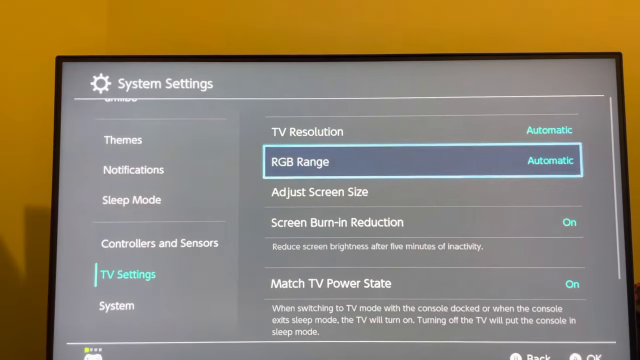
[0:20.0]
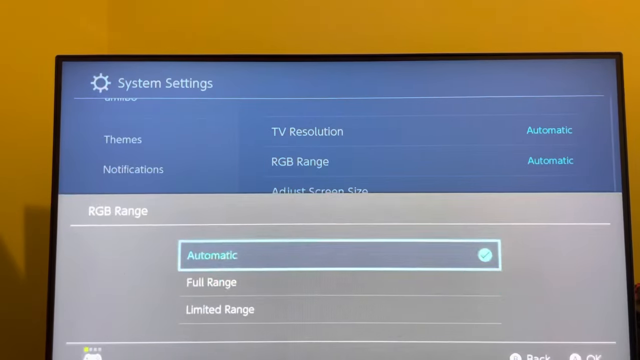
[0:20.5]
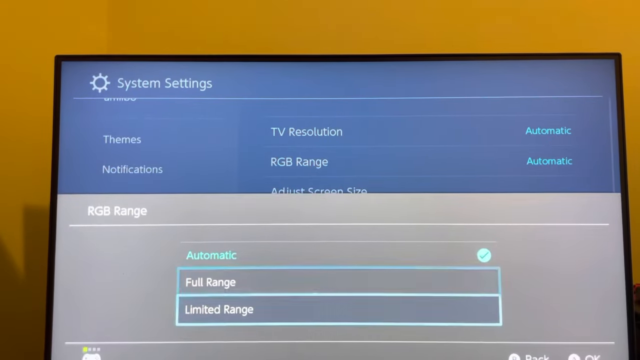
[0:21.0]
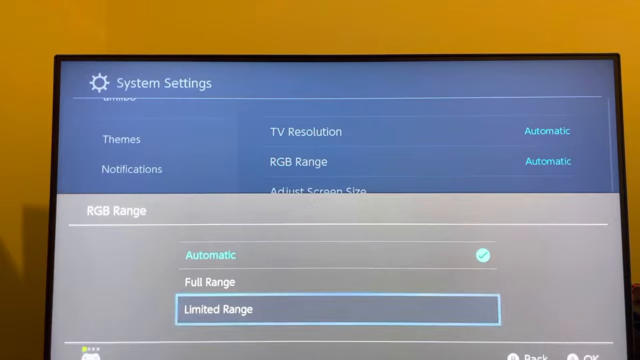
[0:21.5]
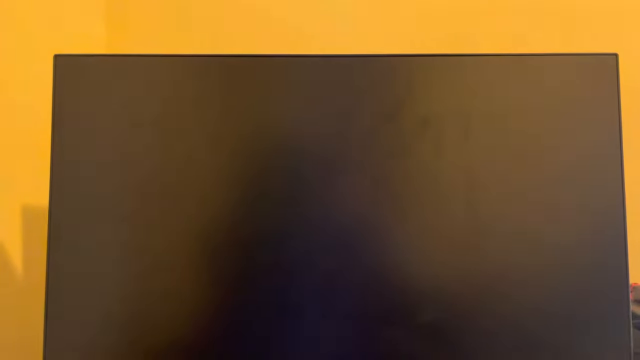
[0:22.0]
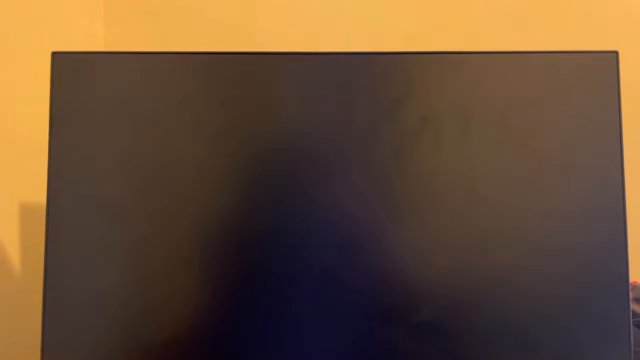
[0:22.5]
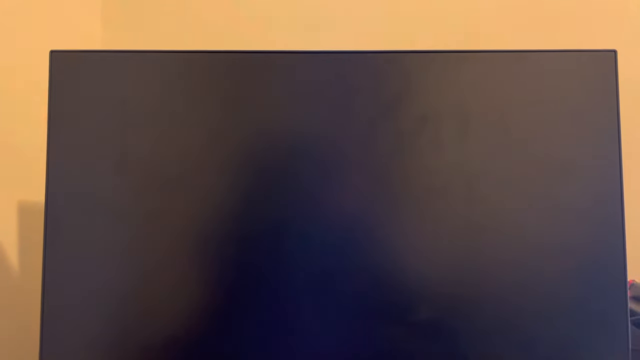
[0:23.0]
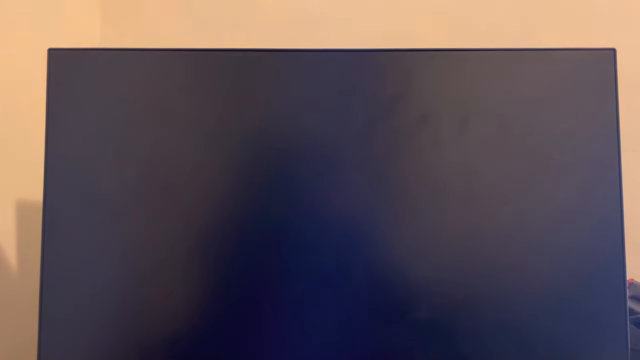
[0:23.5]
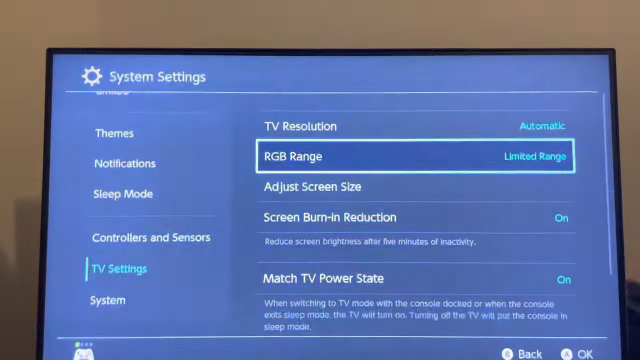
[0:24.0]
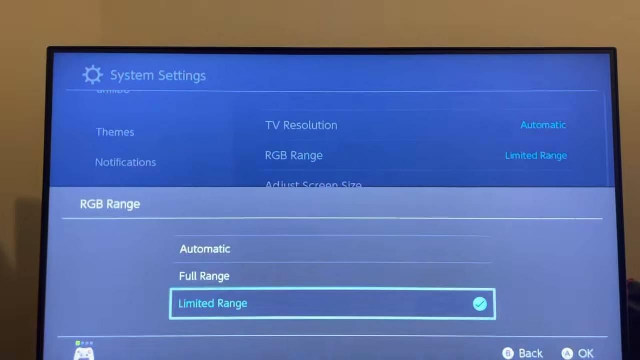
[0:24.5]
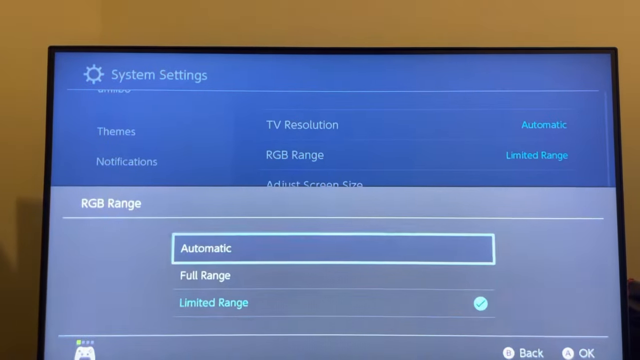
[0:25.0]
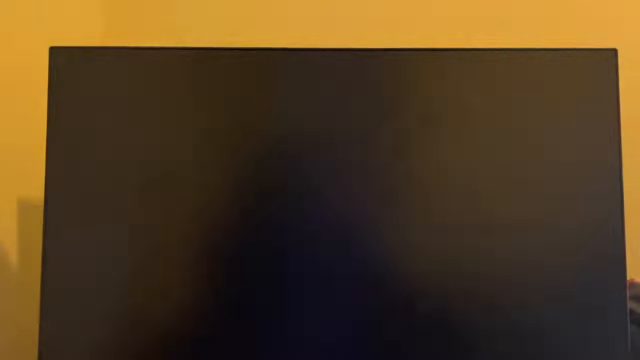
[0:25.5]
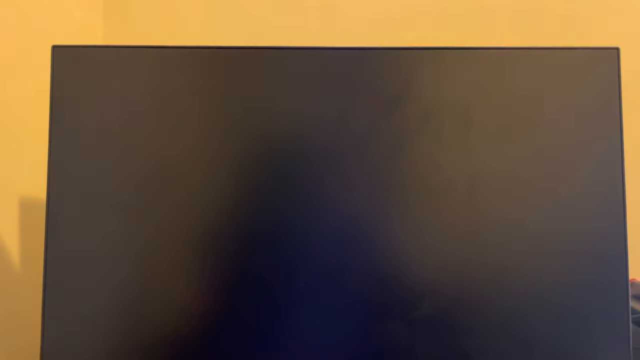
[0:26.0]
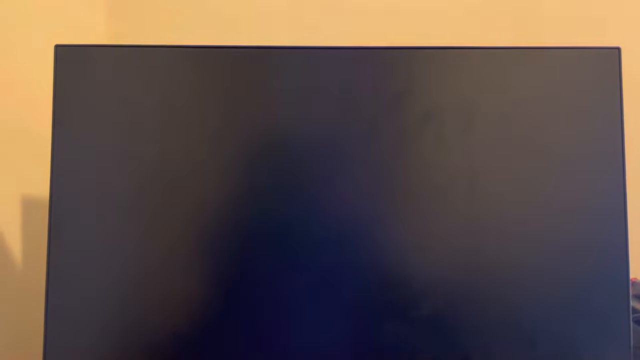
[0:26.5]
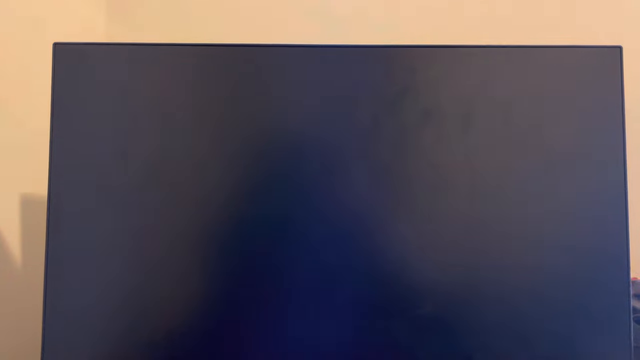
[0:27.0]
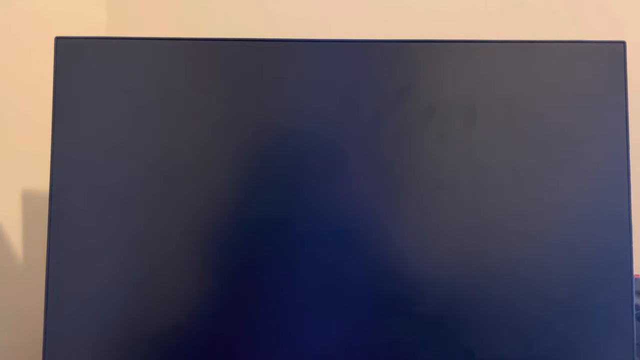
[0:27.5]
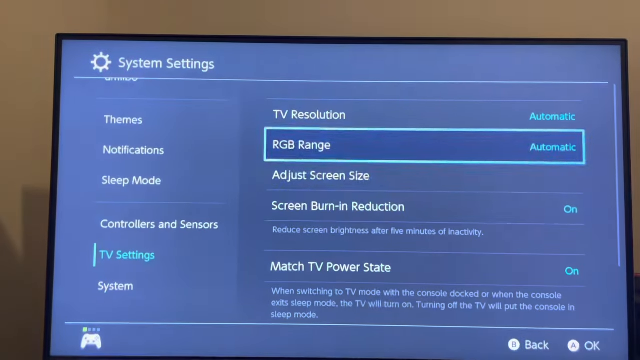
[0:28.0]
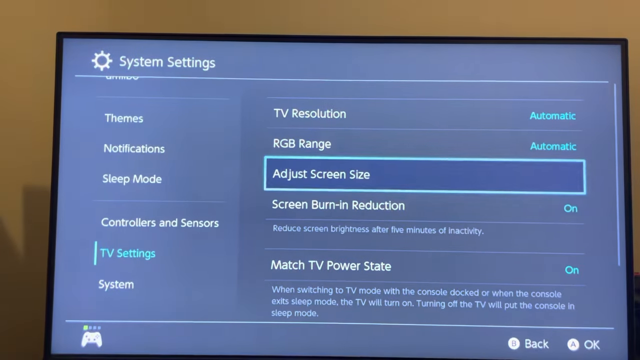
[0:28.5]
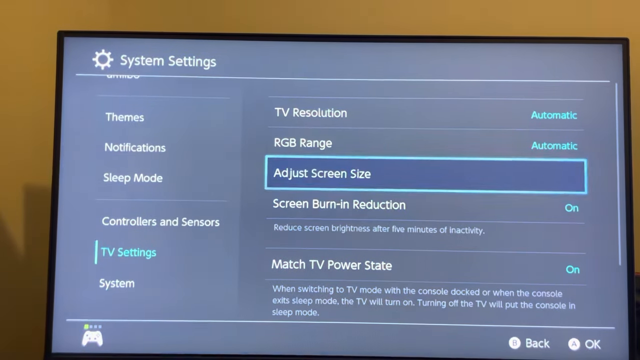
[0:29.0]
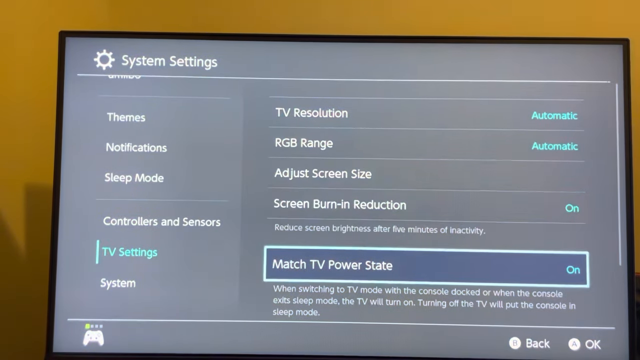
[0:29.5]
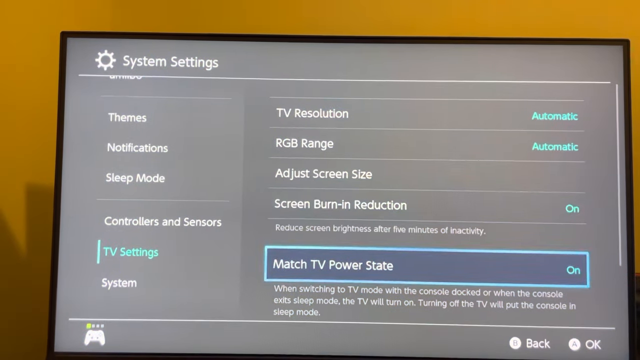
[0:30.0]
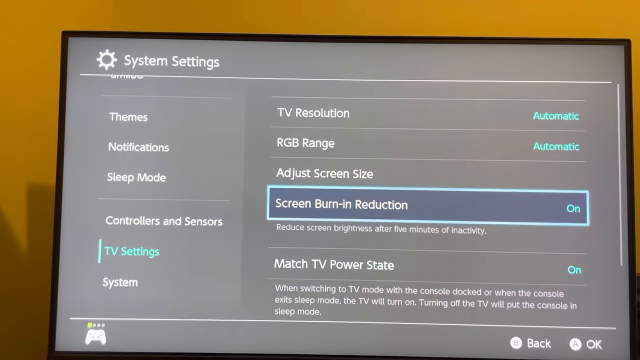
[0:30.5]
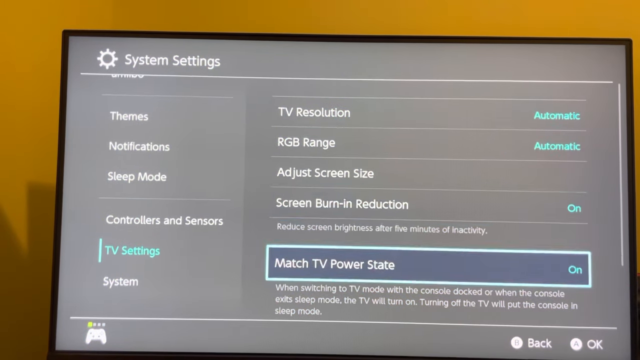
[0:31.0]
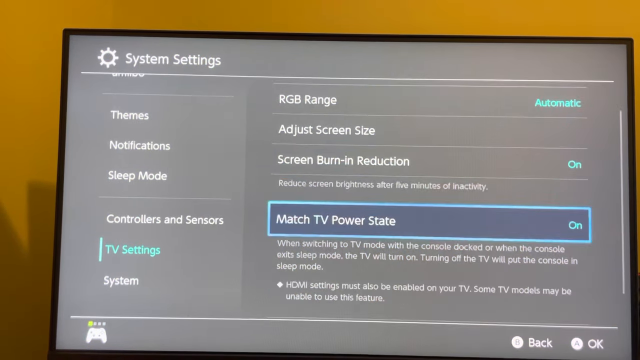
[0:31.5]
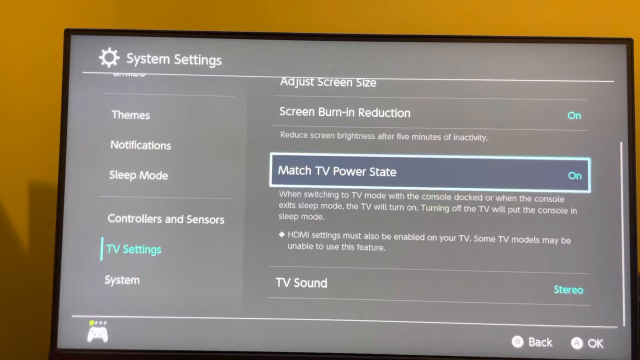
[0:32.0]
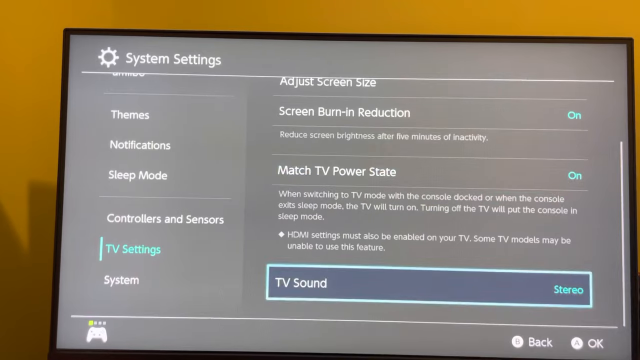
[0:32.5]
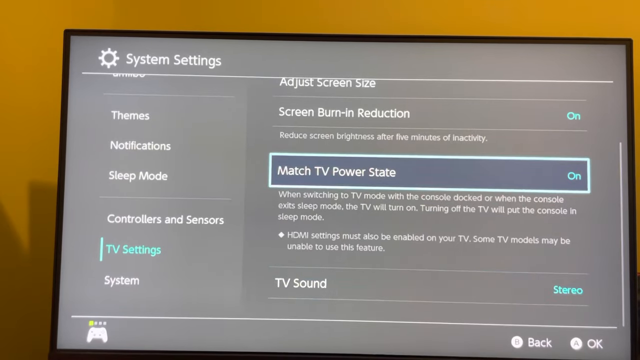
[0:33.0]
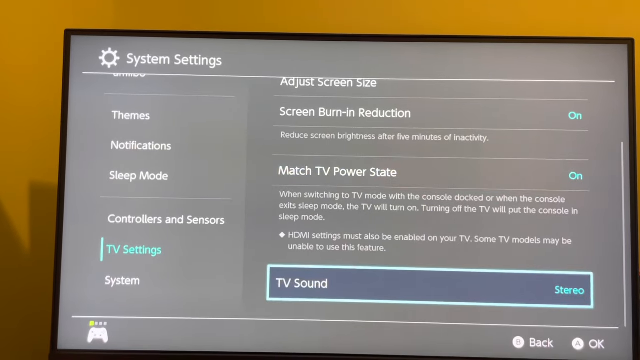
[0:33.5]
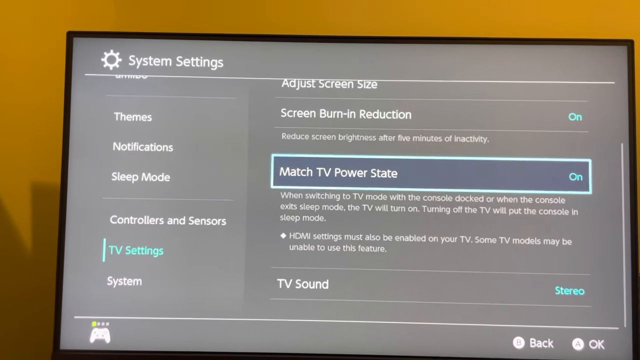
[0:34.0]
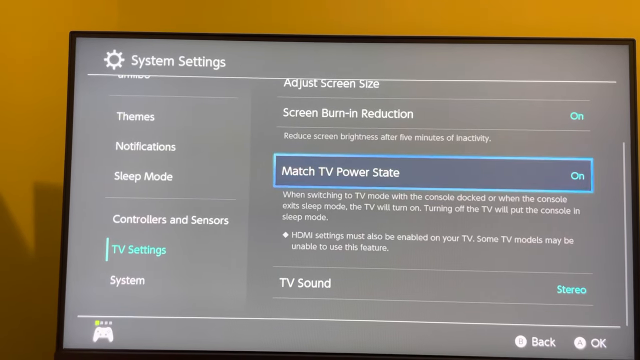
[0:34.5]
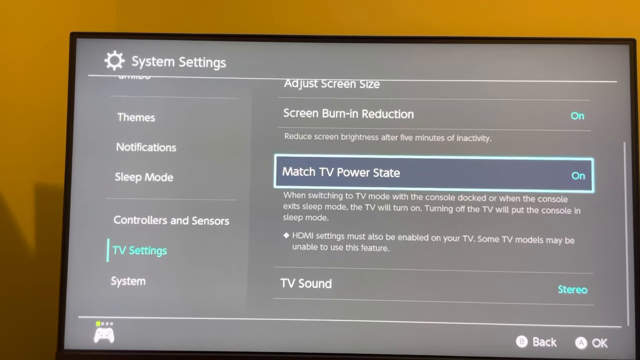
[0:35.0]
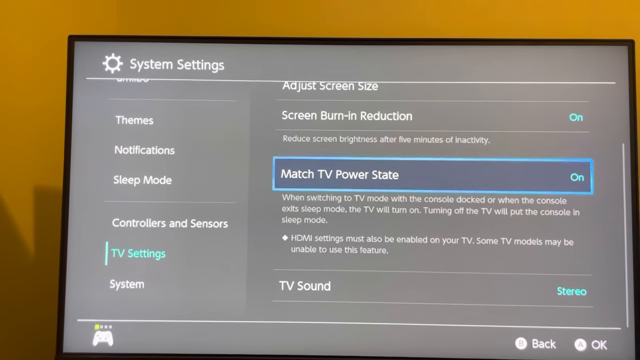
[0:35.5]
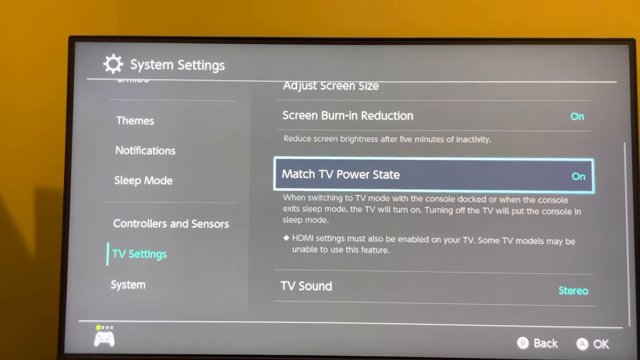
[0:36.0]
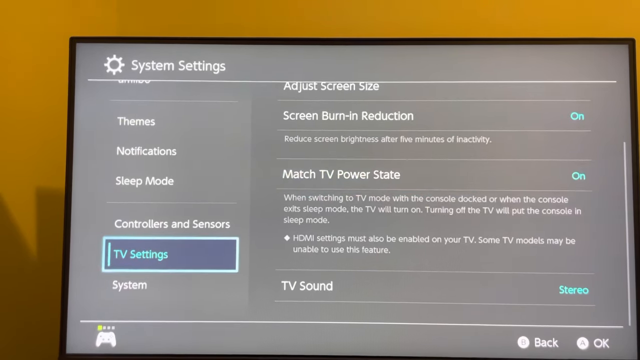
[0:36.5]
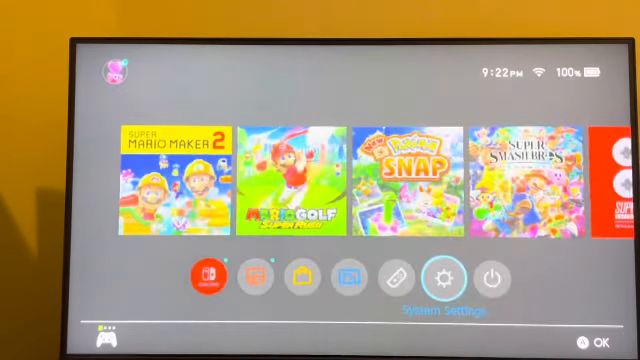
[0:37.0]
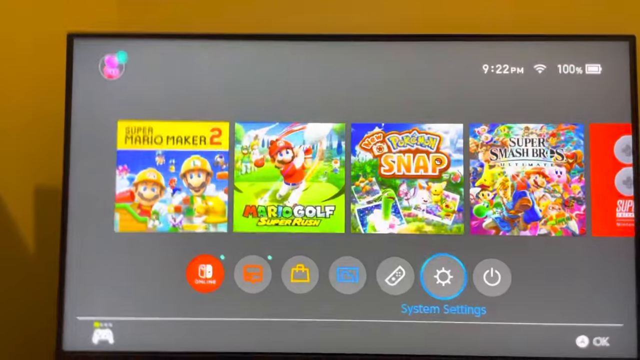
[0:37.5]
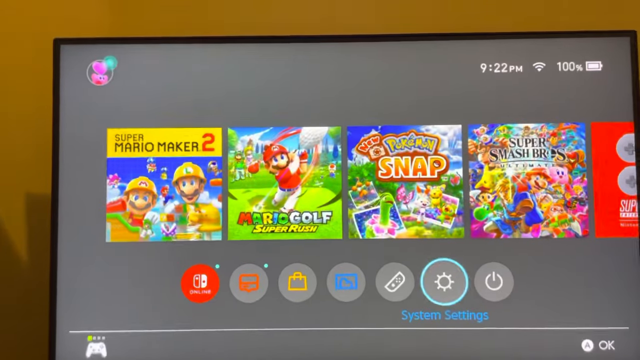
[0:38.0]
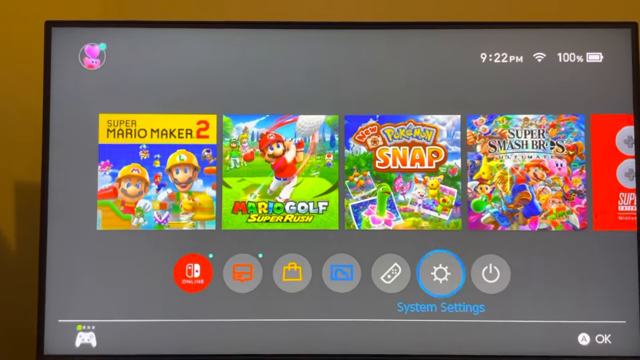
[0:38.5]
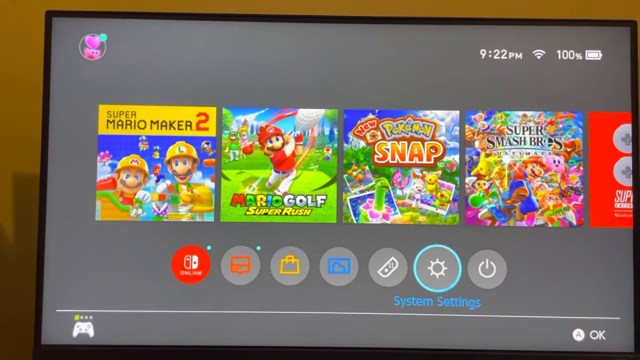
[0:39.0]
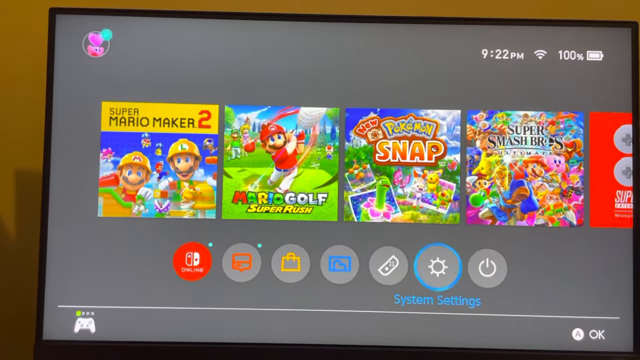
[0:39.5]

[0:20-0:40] The settings menu, apparently on a TV, shows options for RGB range, adjust screen size and screen burning rejection, with "TV settings" in the bottom left-hand corner. TV sound is set to stereo, and match TV scan rate is set. No TV size is shown anywhere on the screen.